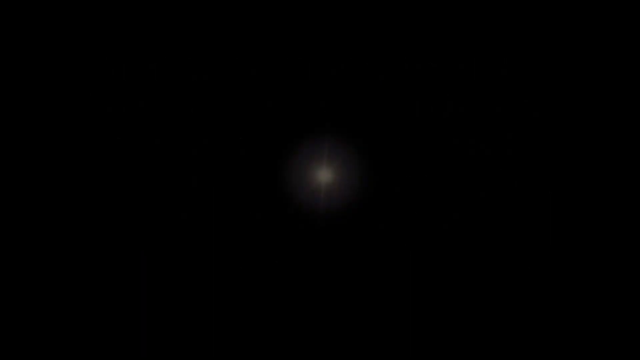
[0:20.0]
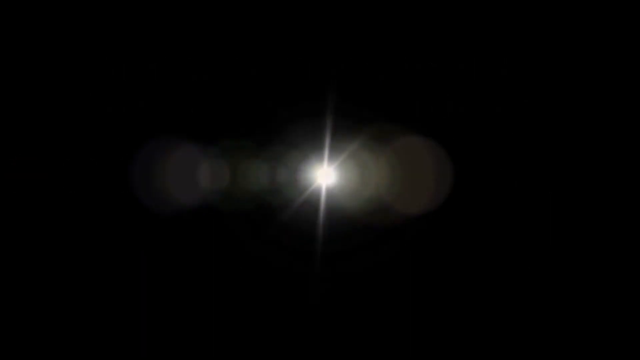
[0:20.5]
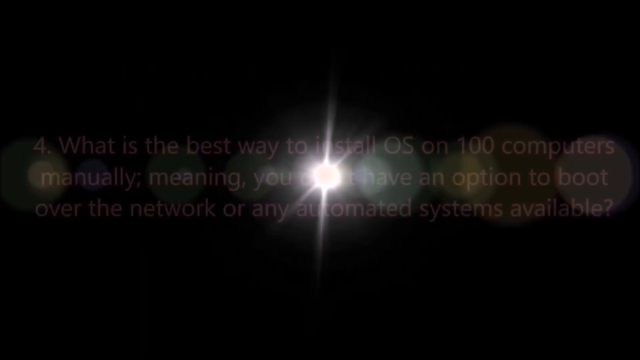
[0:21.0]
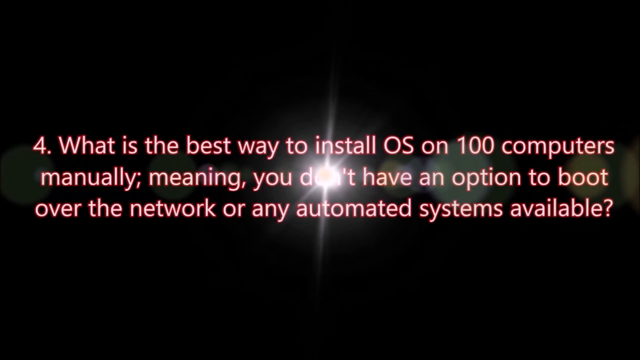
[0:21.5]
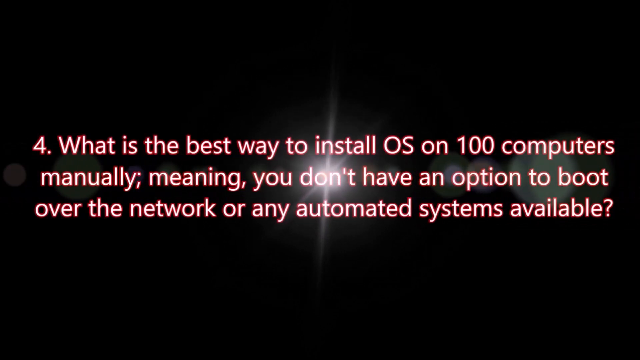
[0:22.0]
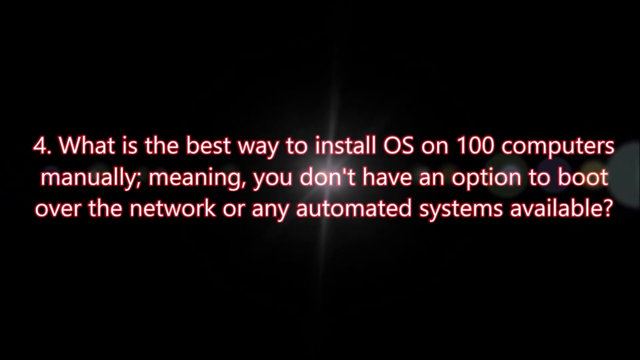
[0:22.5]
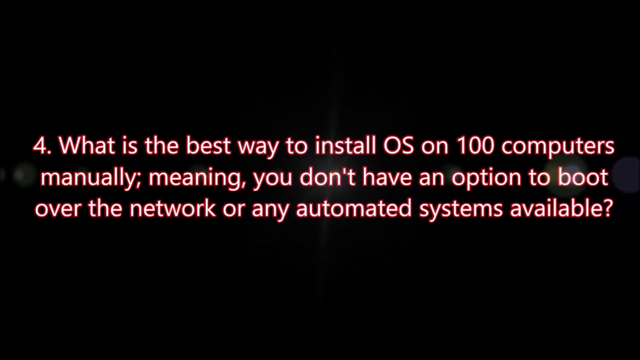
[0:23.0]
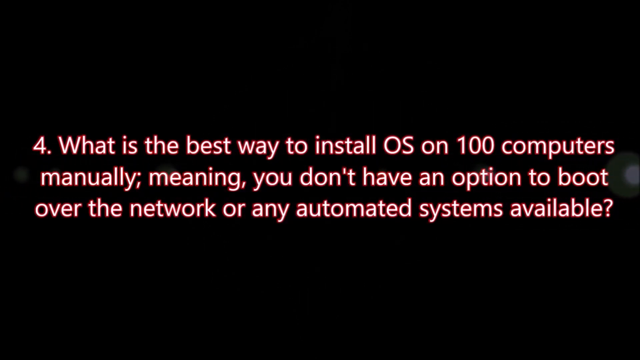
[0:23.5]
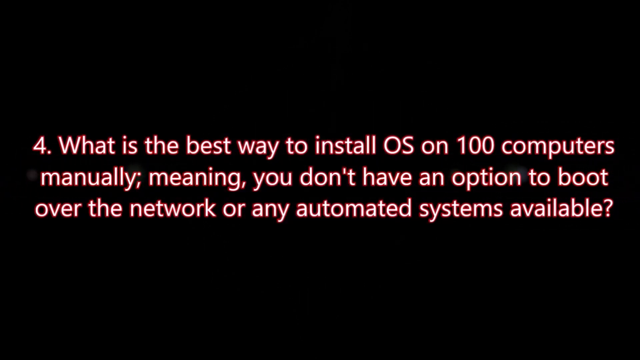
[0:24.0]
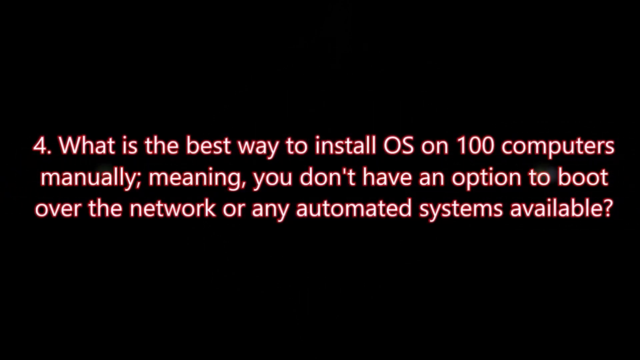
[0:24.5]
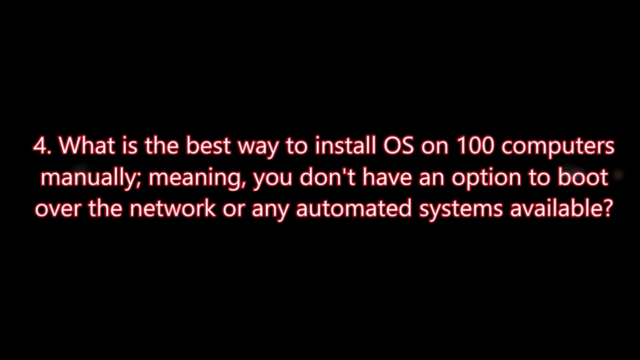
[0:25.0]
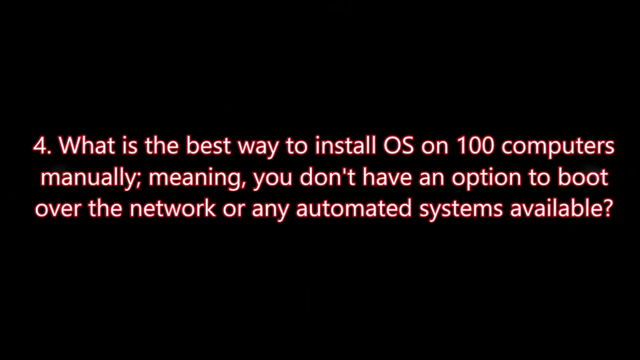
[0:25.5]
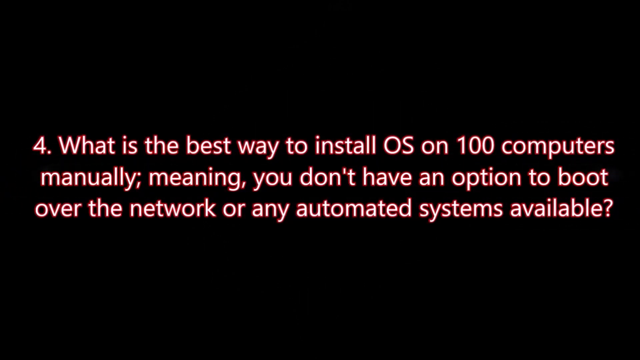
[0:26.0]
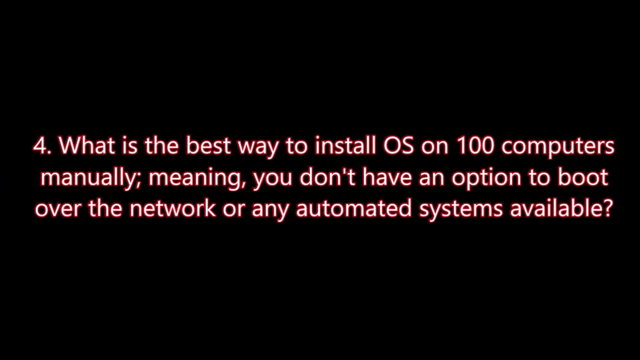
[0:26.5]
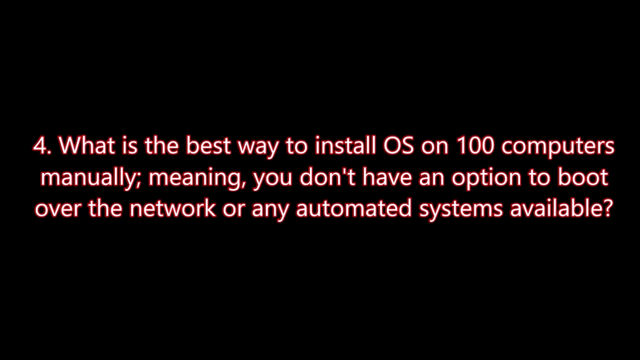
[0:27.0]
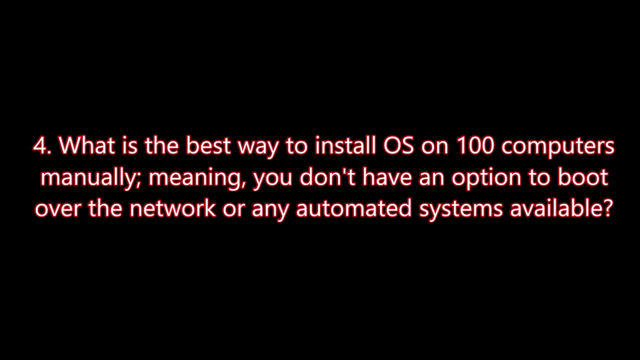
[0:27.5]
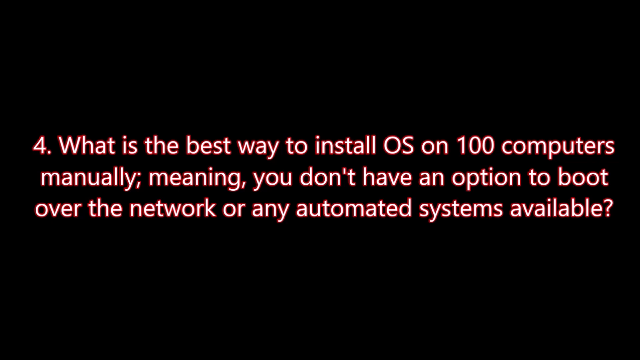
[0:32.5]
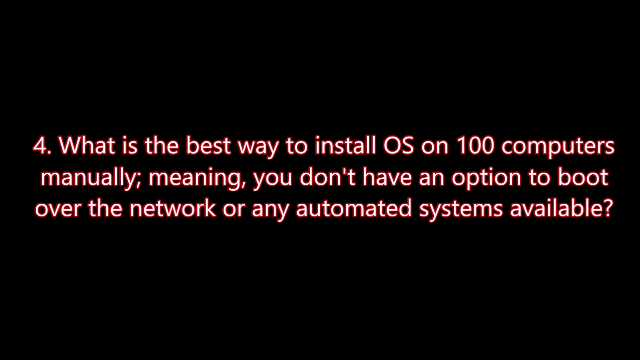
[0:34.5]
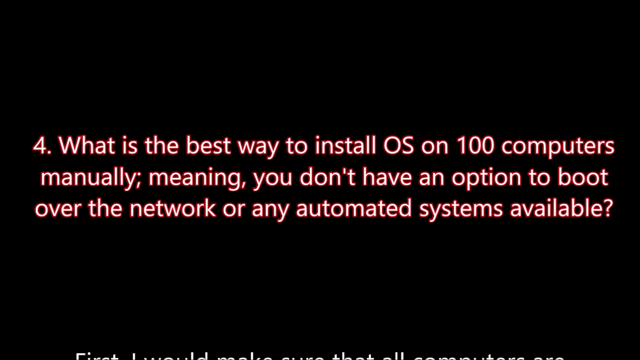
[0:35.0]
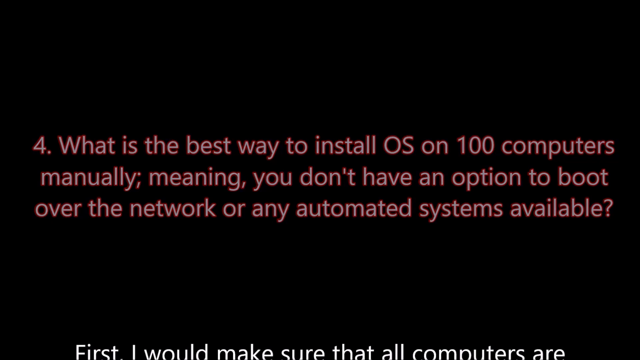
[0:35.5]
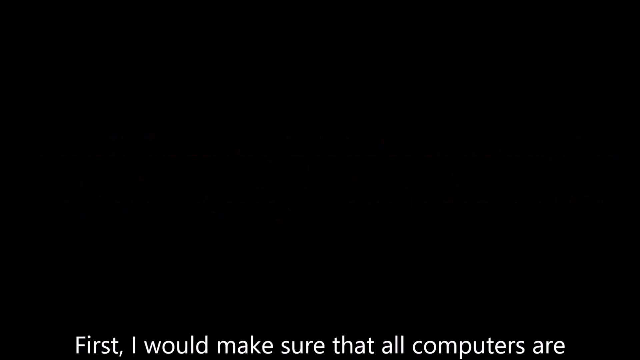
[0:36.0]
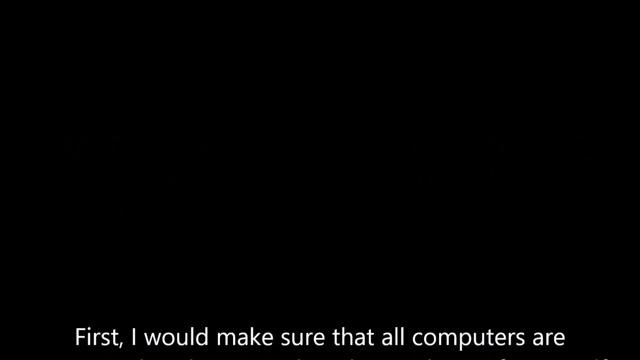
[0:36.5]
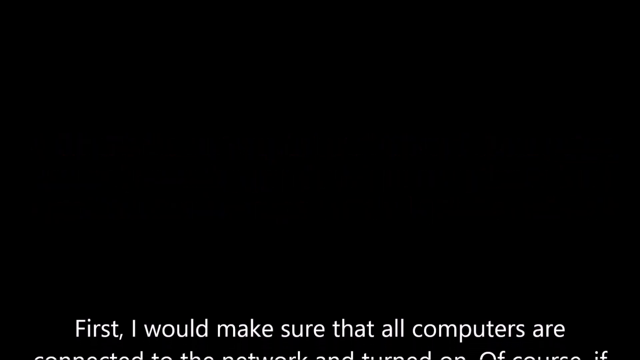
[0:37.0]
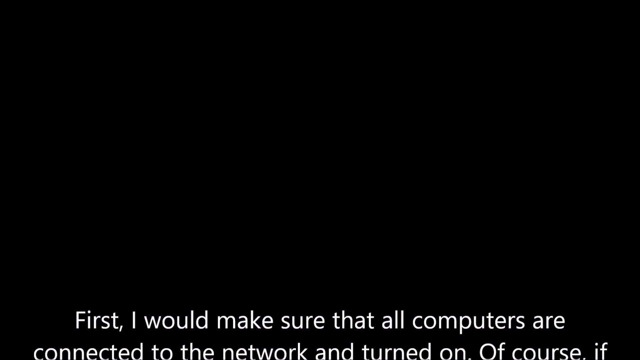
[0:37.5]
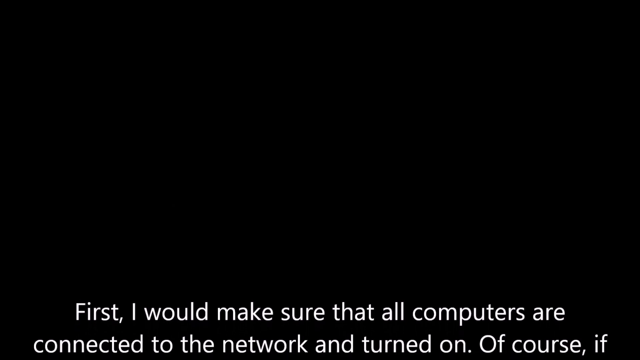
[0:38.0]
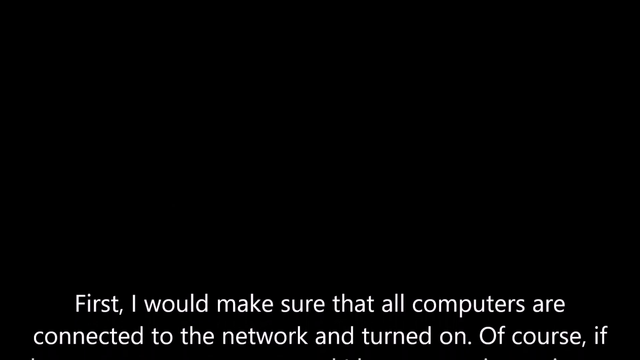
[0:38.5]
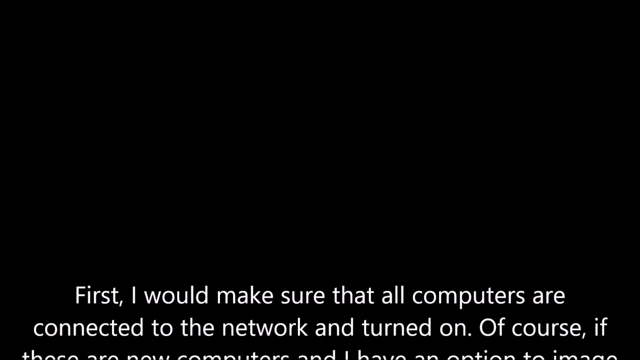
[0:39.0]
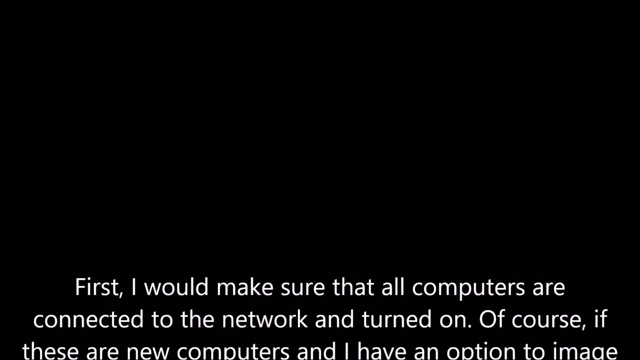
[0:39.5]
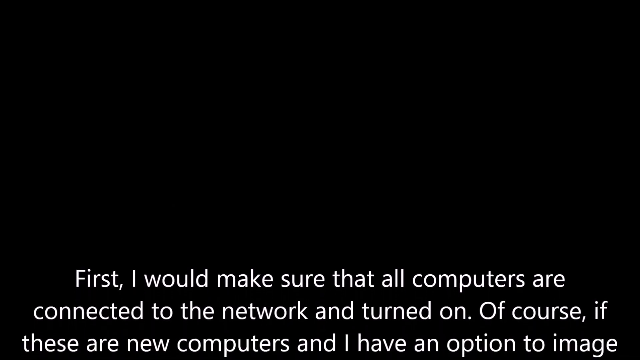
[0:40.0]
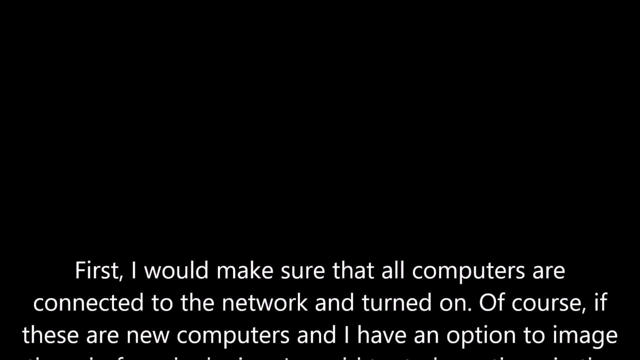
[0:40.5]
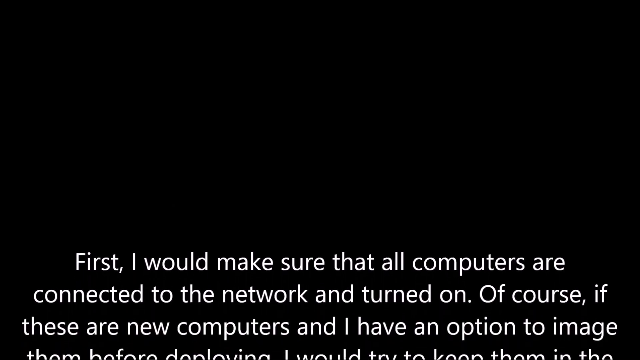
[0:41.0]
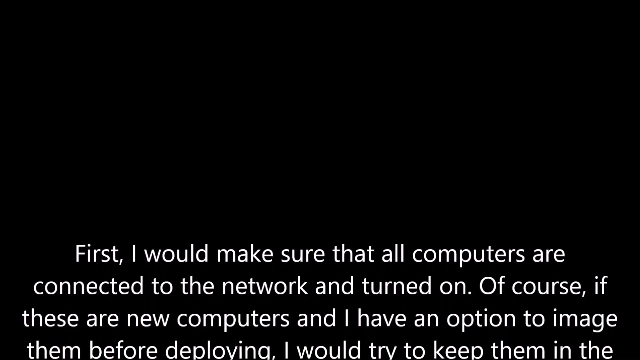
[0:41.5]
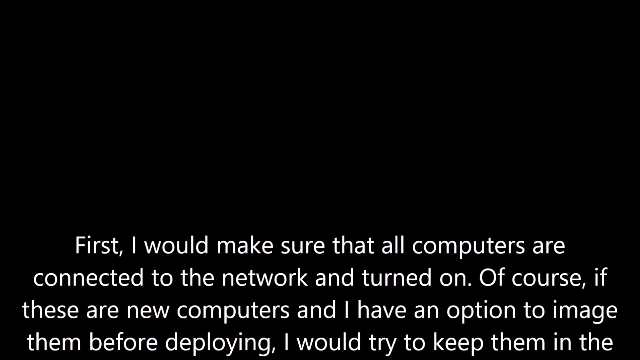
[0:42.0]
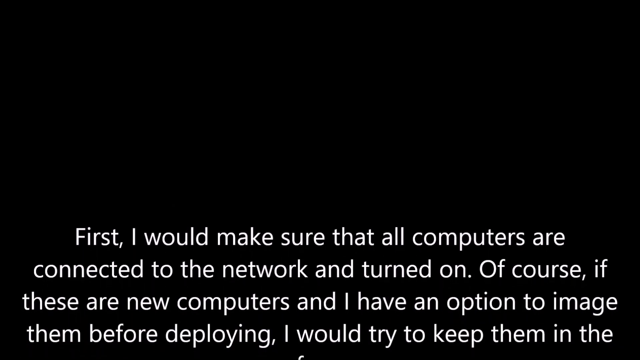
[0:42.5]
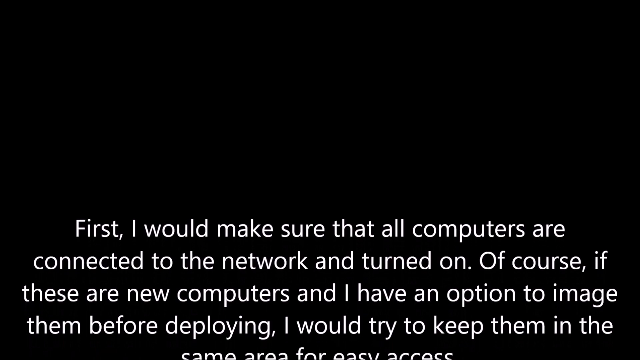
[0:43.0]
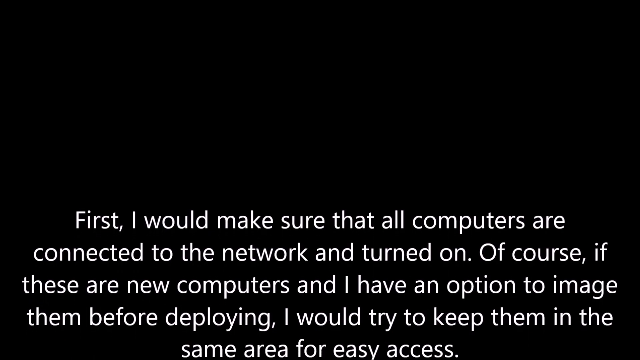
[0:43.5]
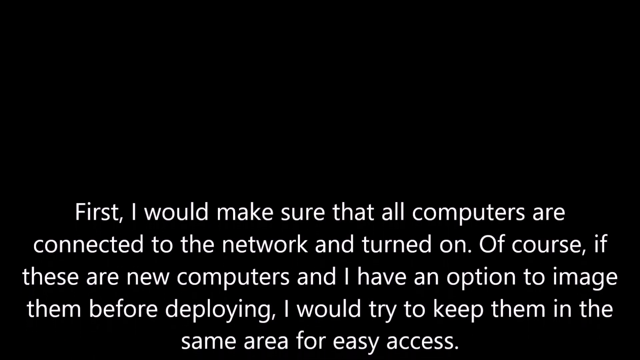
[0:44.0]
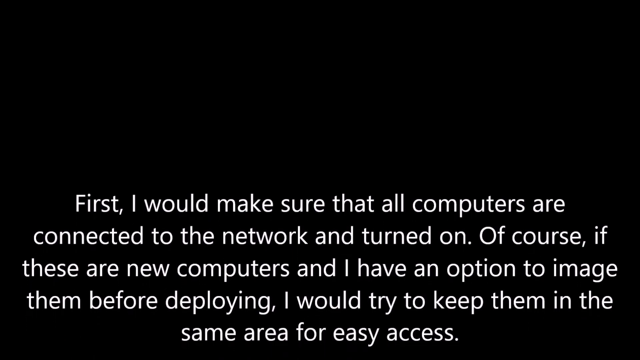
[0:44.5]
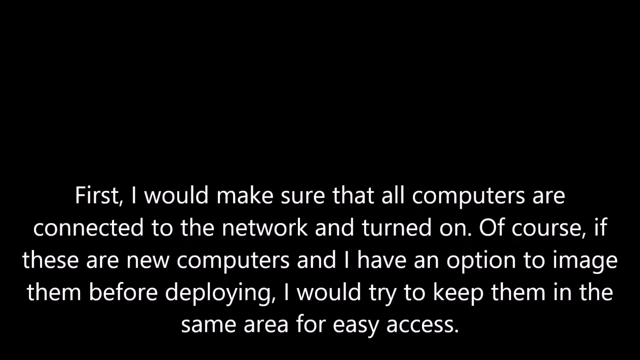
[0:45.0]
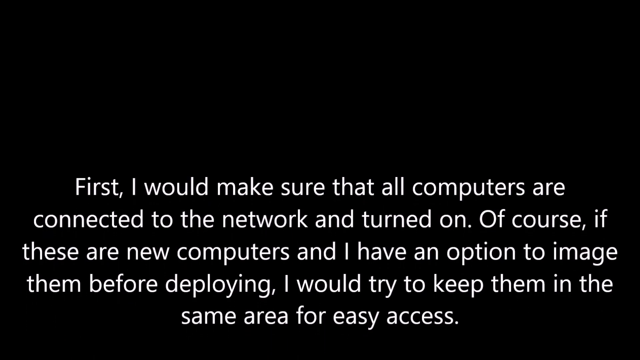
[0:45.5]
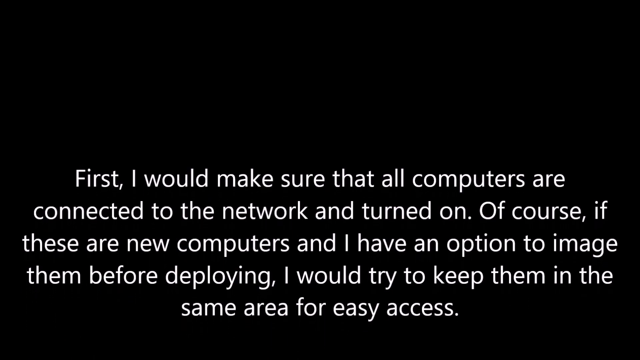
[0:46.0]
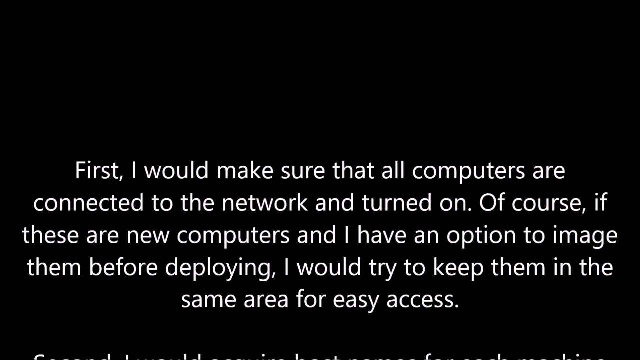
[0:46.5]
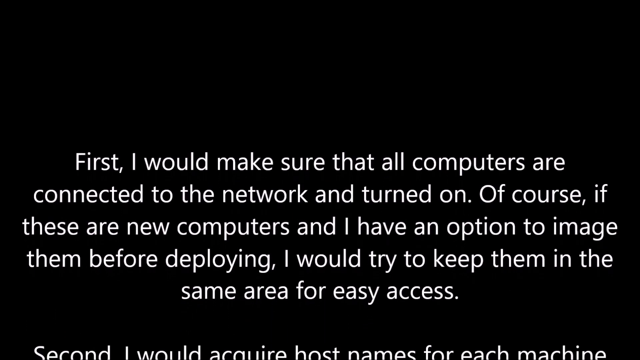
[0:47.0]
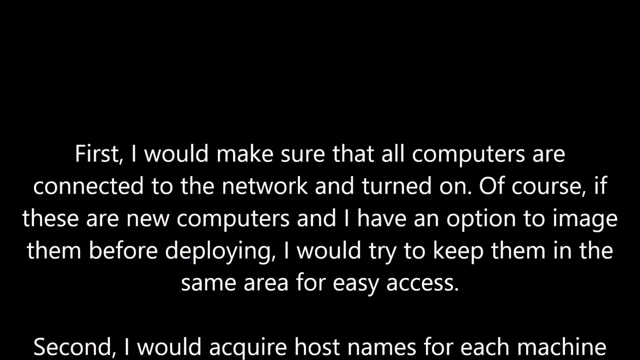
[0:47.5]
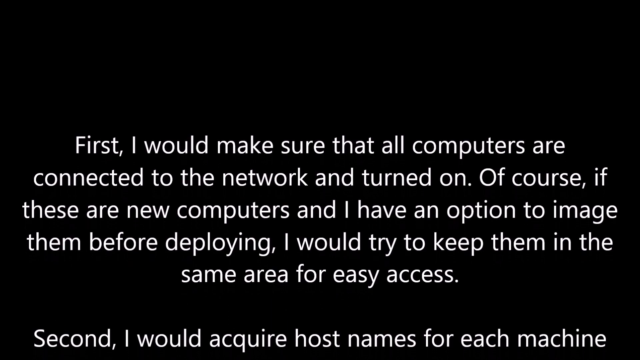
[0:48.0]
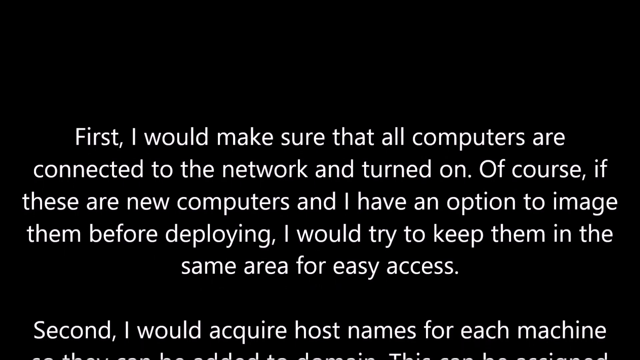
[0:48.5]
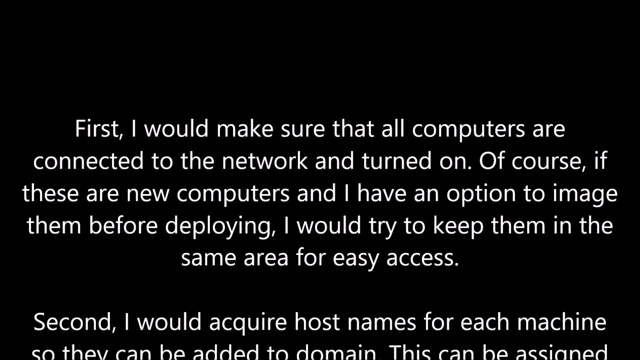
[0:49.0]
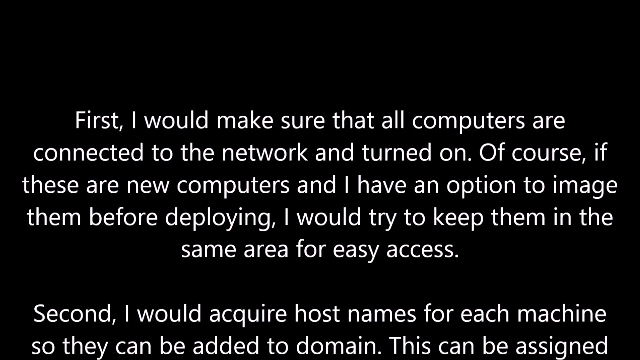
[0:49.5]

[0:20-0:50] A transitional effect opens the shot: a white glowing star gradually rotates with a bokeh effect of faded blue, gold and pink circles. It fades away to reveal white sans-serif text with a bright red outline that takes up the centre of the screen and asks a question about technology. It reads: "4. What is the best way to install OS on 100 computers manually; meaning you don't have an option to boot over the network or any automated systems available?" The text remains on screen for approximately 15 seconds before fading away to black. Basic white text then begins to scroll up from the bottom of the screen until one paragraph is mostly visible and one sentence of the next is partially seen. It reads: "First I would make sure that all the computers are connected to the network and turned on. Of course, if these are new computers and I have an option to image them before deploying, I would try to keep them in the same area for easy access."